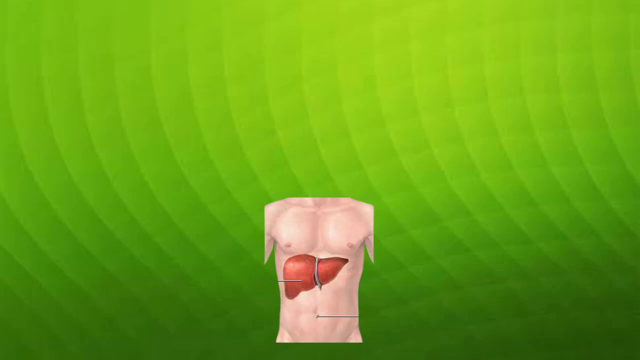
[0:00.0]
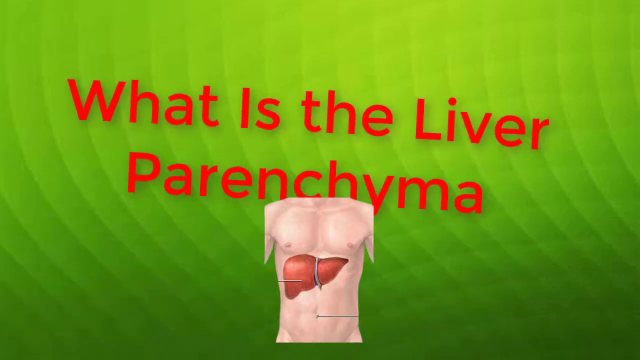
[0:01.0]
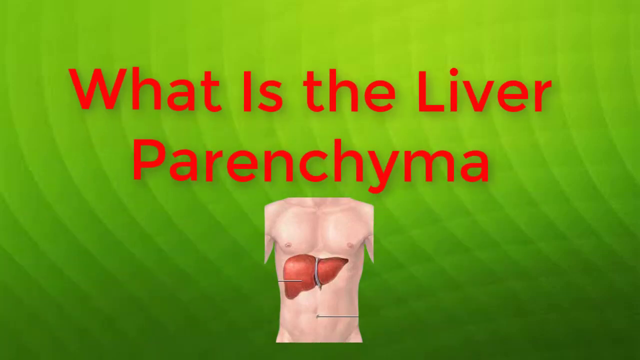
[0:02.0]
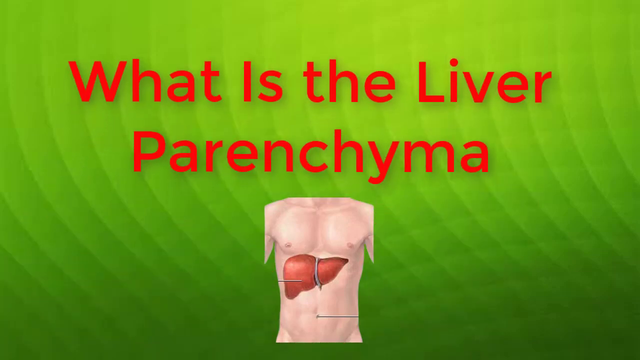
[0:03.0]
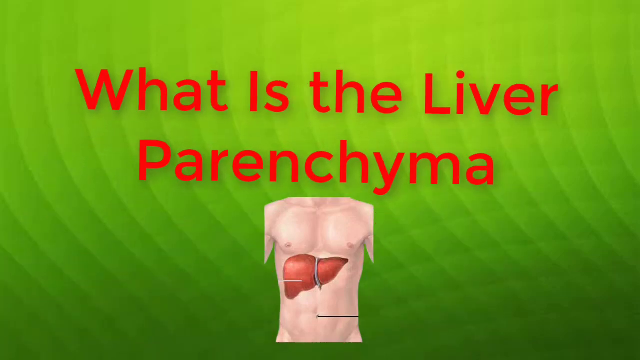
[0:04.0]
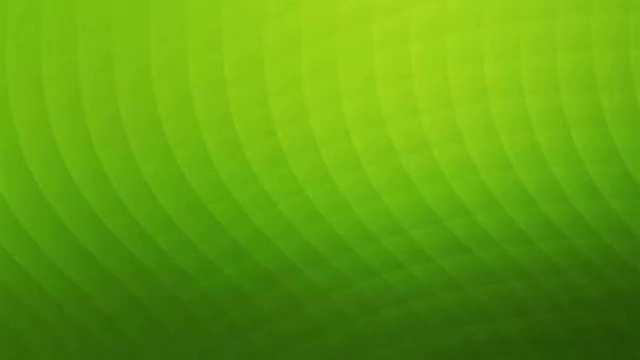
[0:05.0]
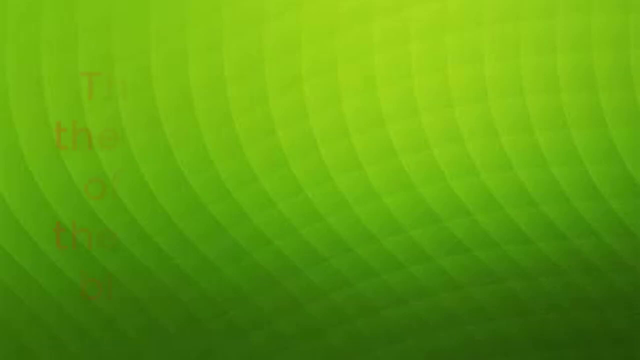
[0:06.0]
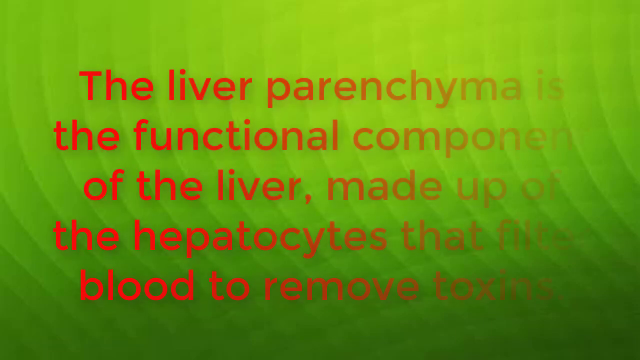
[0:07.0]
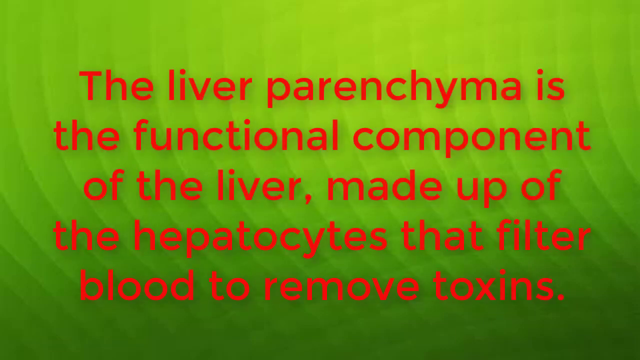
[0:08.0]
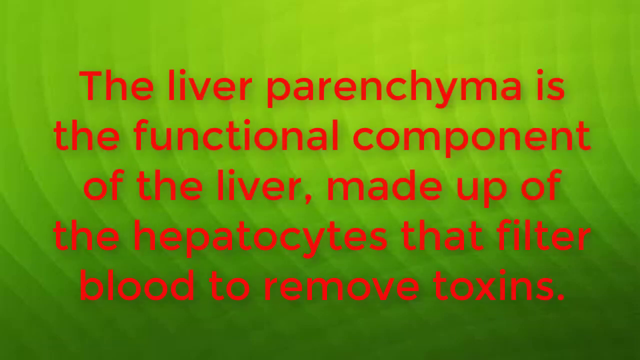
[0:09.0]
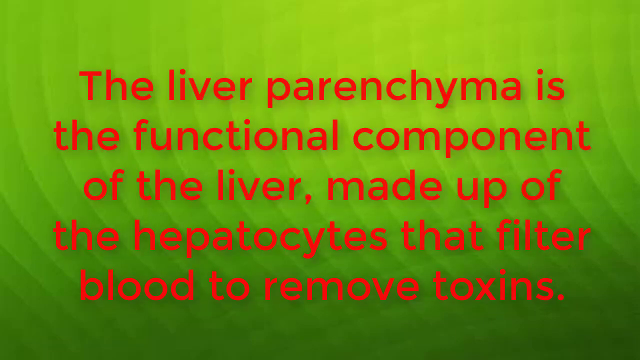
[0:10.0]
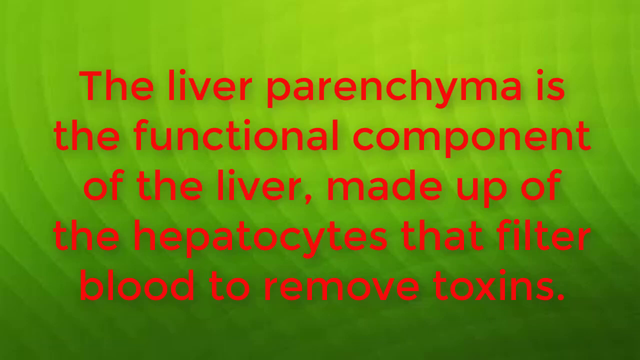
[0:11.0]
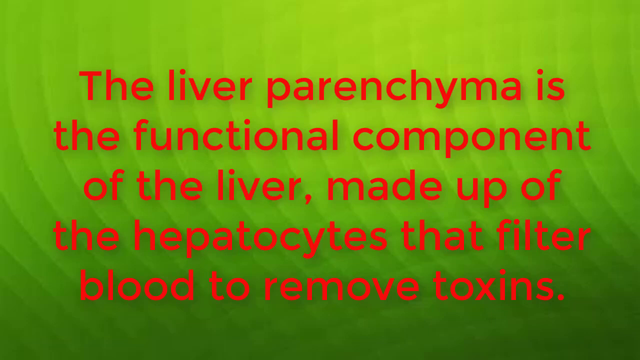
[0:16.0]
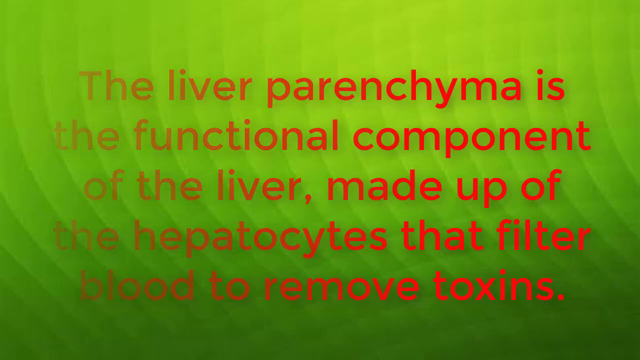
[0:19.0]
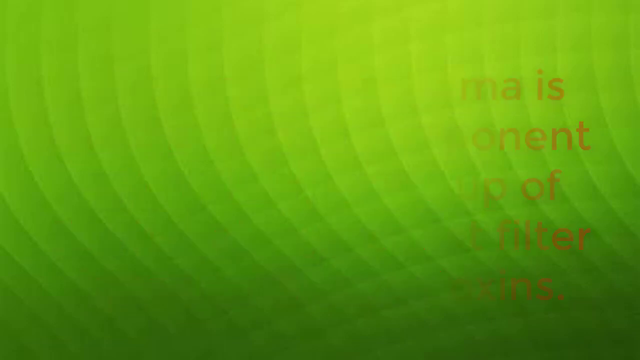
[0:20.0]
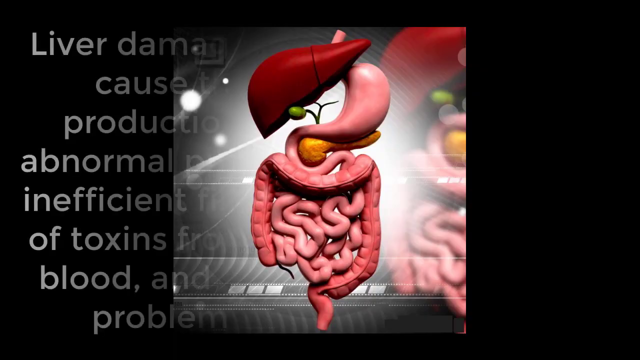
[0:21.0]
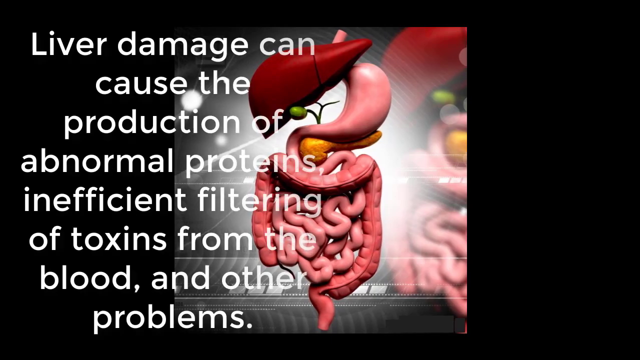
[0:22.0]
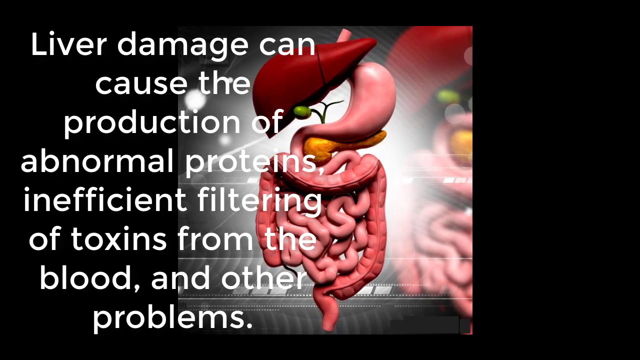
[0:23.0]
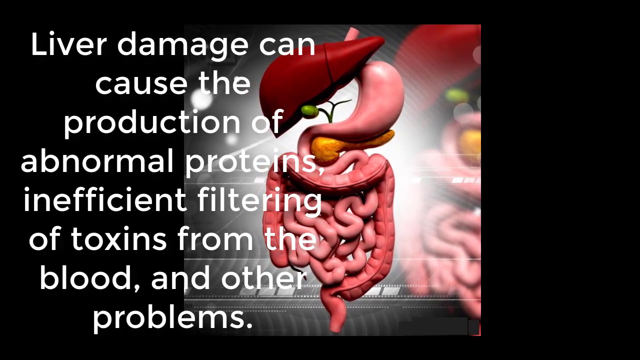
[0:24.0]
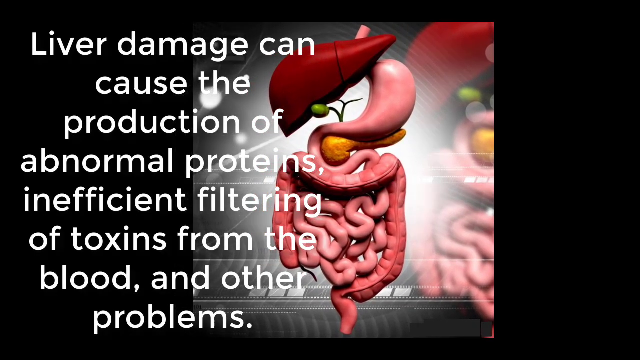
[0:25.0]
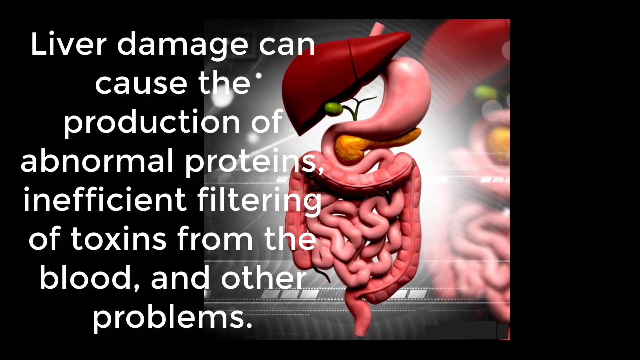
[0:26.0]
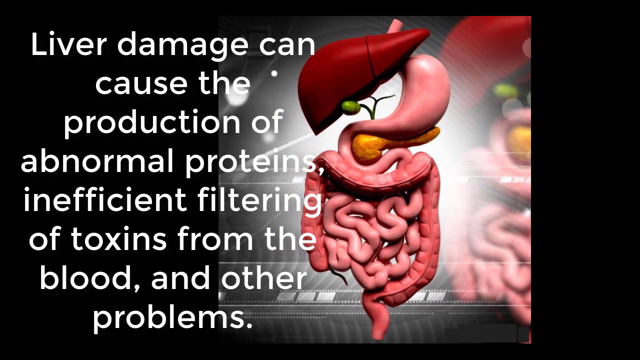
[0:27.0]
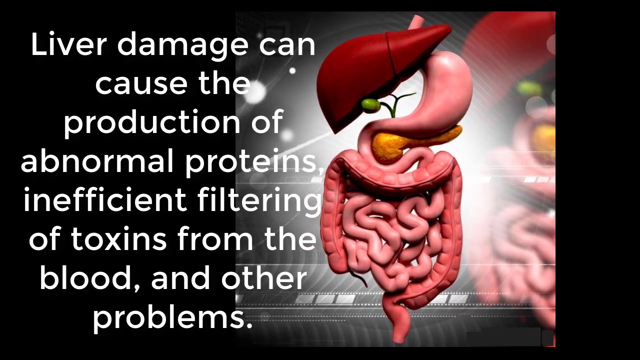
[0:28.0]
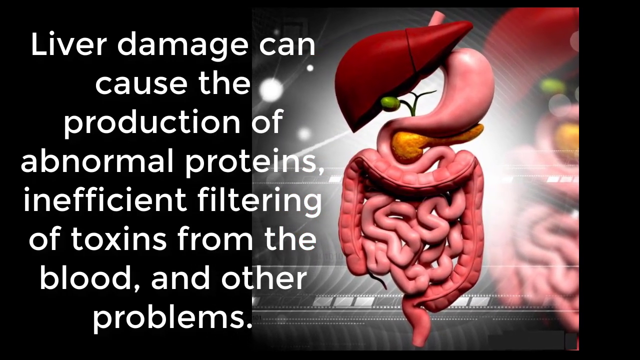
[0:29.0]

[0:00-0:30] An image of a human torso appears with red text in the foreground reading "what is the liver parenchyma". It moves to another slide reading "the liver parenchyma is a functional component of the liver made up of the hepatocytes that filter blood to remove toxins", set against a wavy, plain green background. It then cuts to a slide showing the intestines of a human along with the liver, while white text is written out in the foreground: "liver damage can cause the production of abnormal proteins, inefficient filtering of toxins from the blood and other problems." The background is black around the sides, and the picture has a white background behind the intestines.